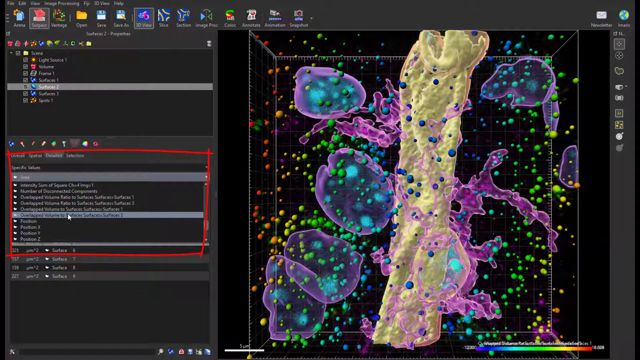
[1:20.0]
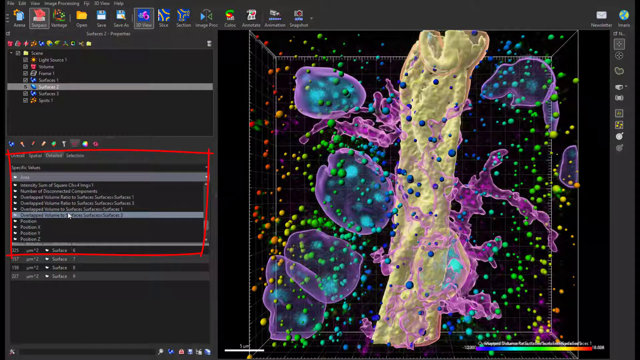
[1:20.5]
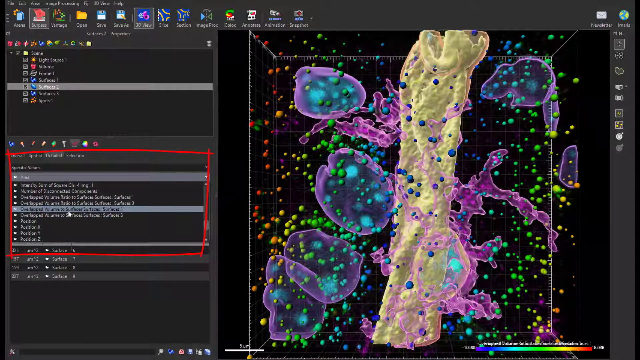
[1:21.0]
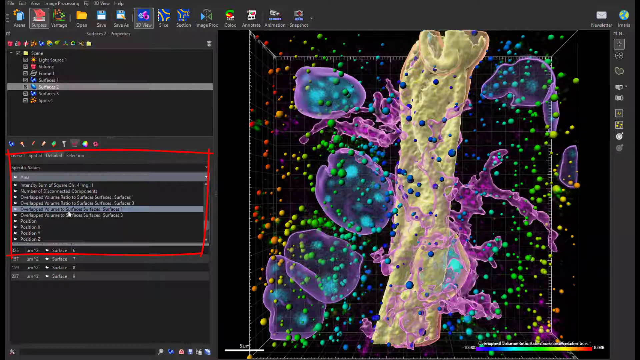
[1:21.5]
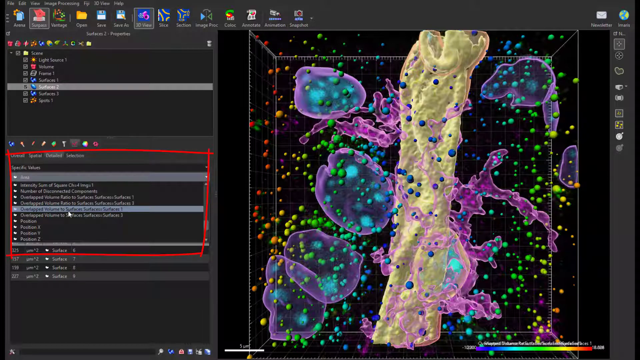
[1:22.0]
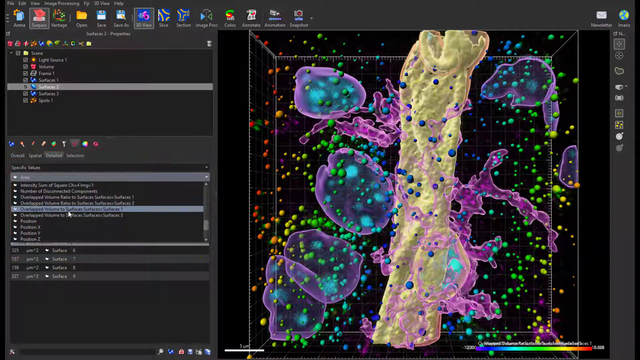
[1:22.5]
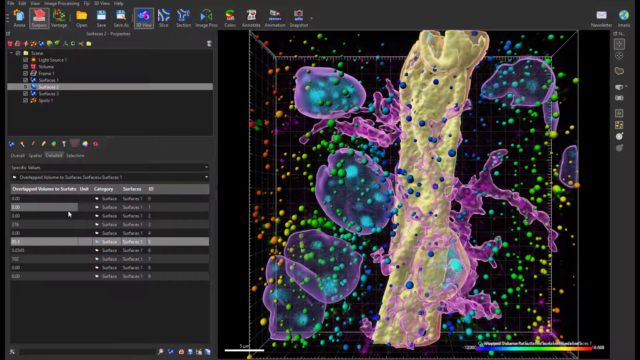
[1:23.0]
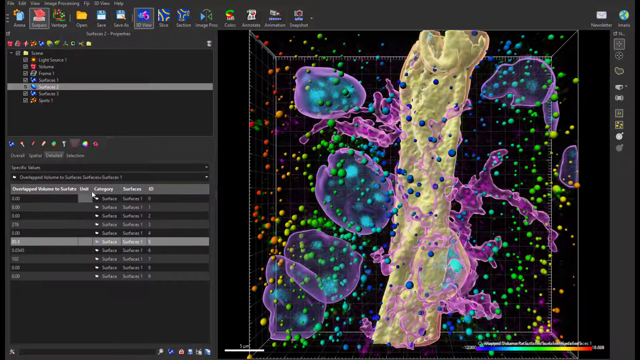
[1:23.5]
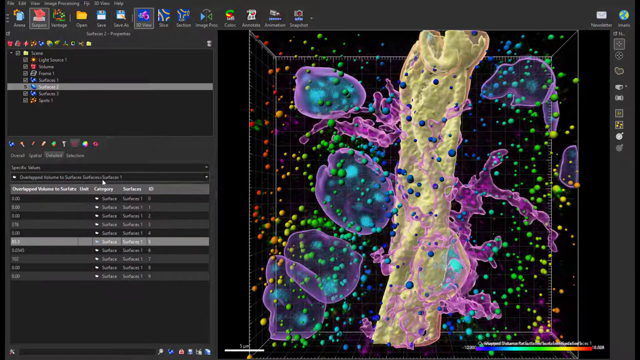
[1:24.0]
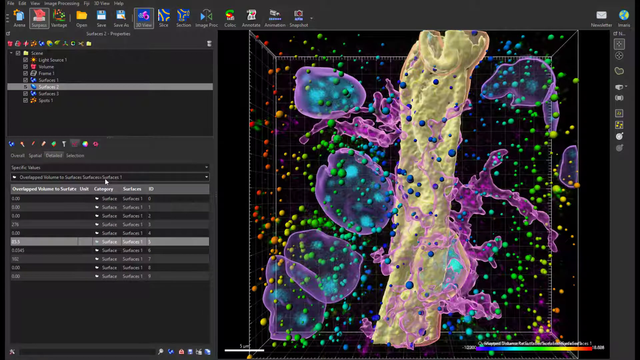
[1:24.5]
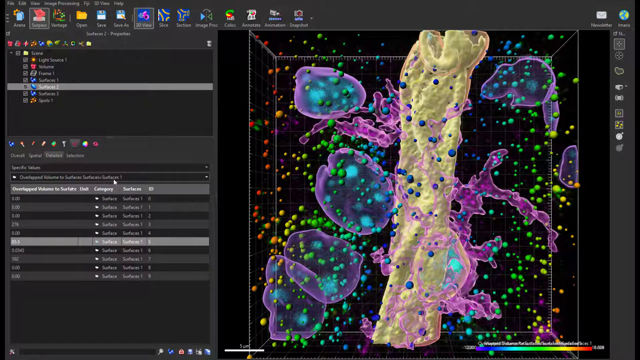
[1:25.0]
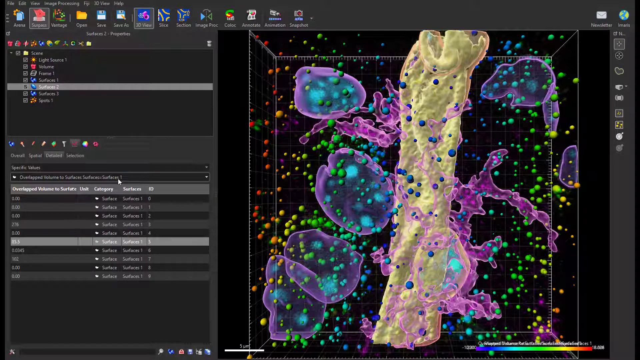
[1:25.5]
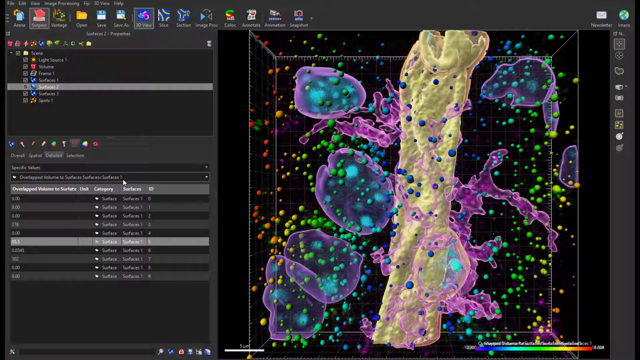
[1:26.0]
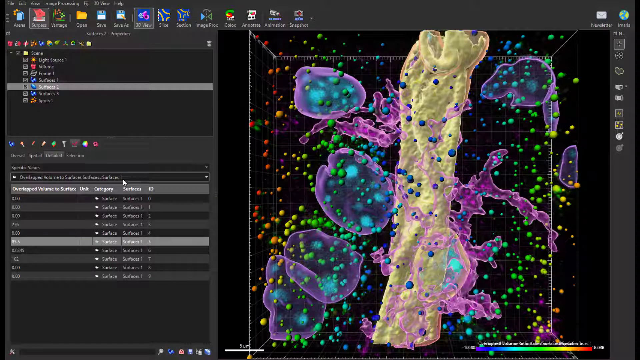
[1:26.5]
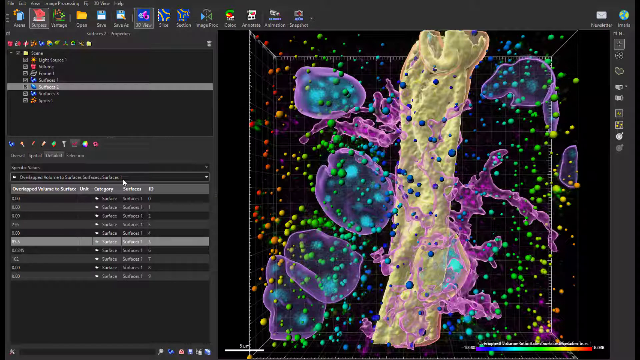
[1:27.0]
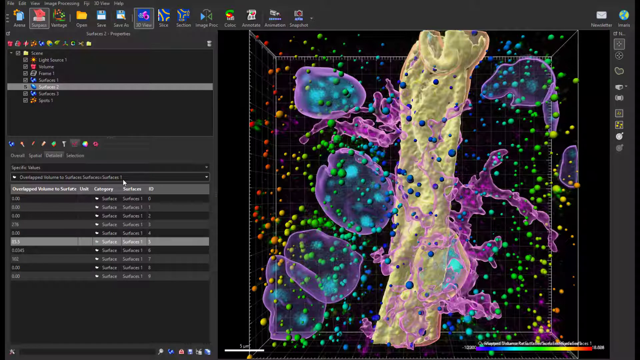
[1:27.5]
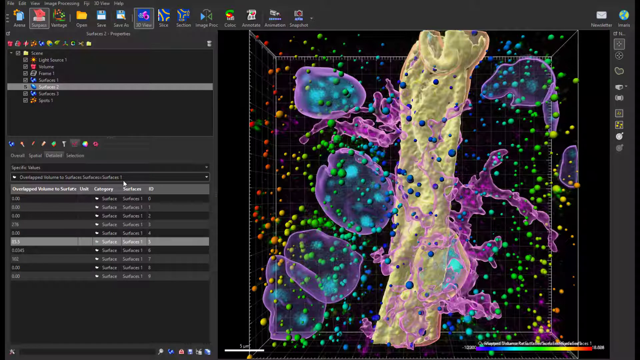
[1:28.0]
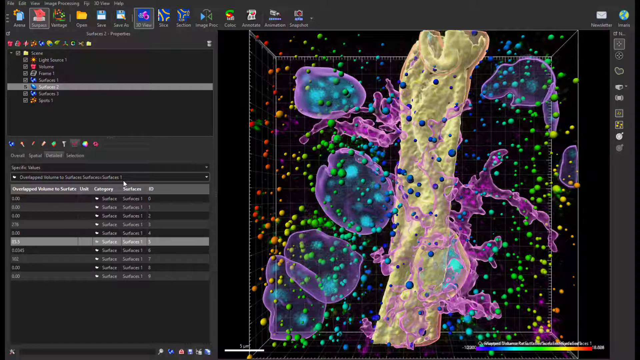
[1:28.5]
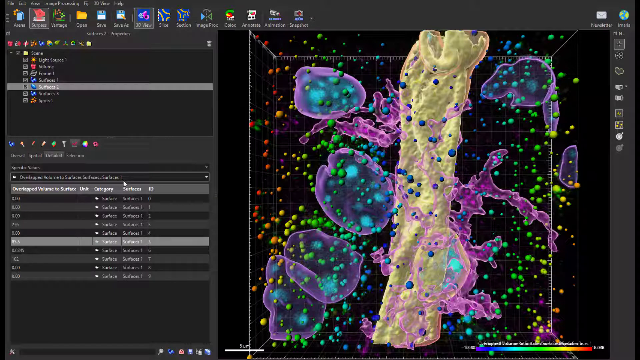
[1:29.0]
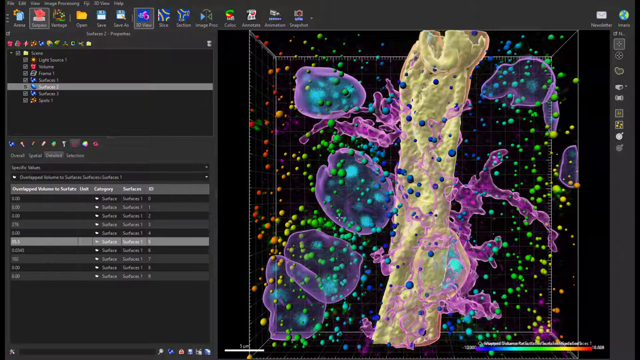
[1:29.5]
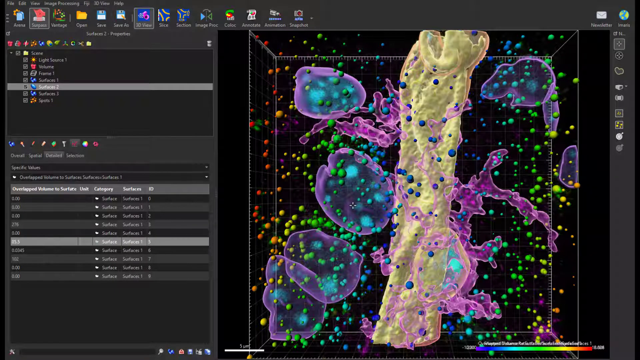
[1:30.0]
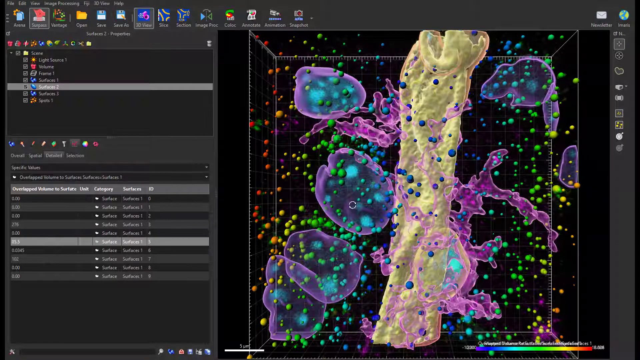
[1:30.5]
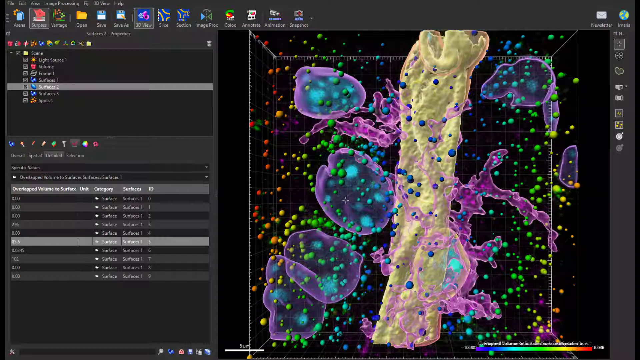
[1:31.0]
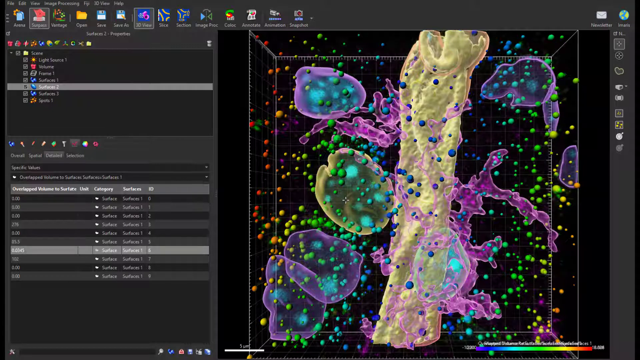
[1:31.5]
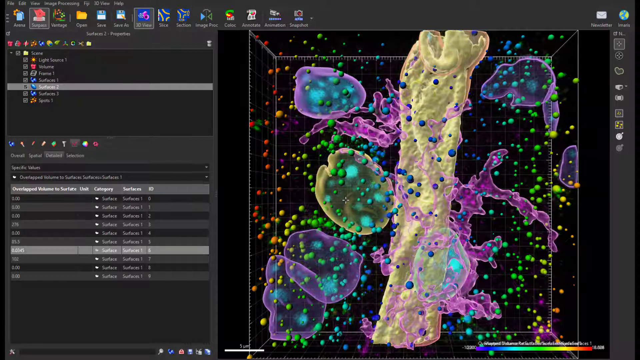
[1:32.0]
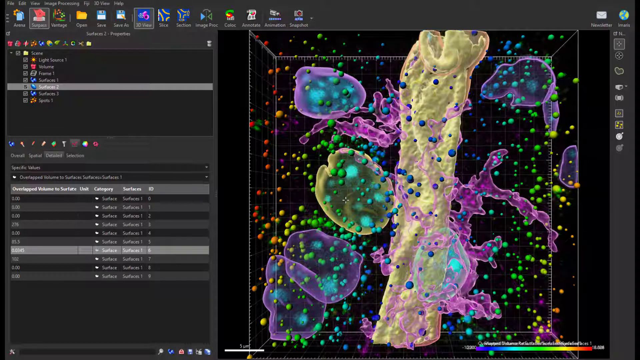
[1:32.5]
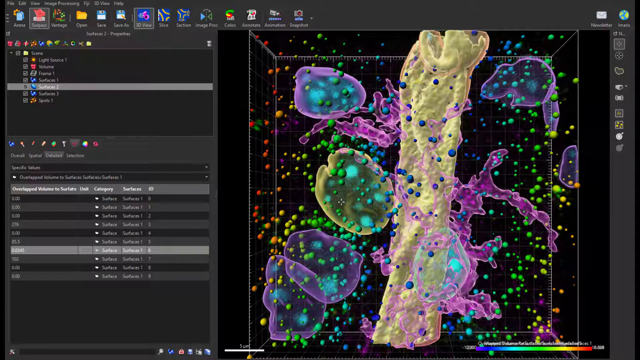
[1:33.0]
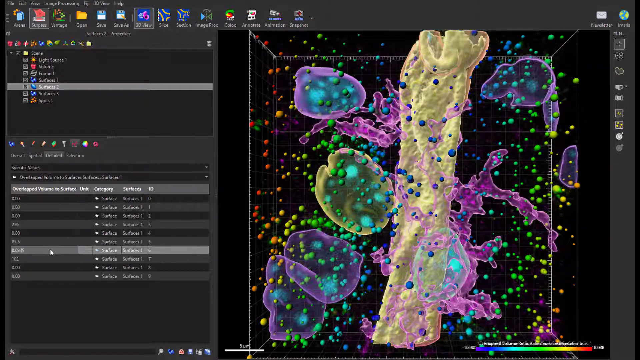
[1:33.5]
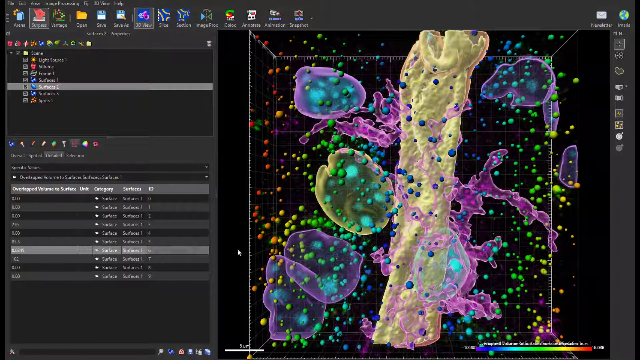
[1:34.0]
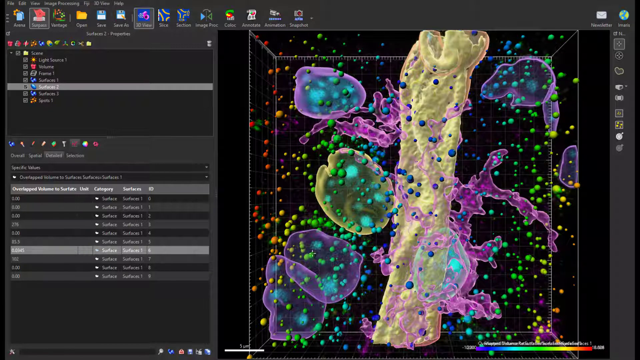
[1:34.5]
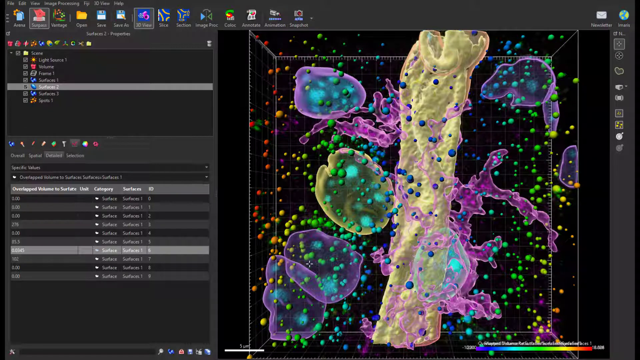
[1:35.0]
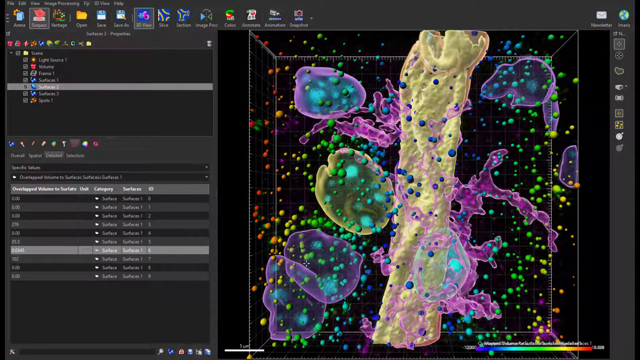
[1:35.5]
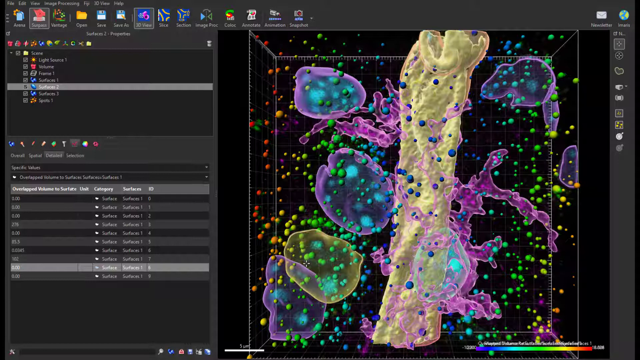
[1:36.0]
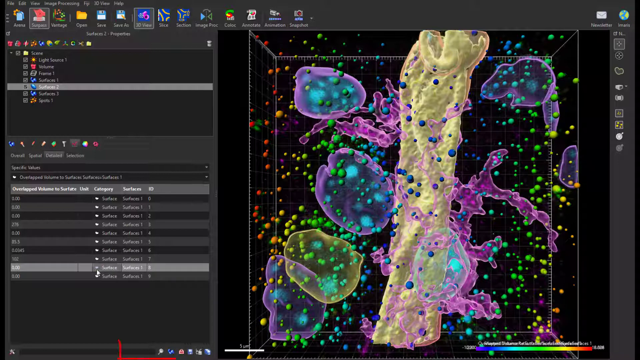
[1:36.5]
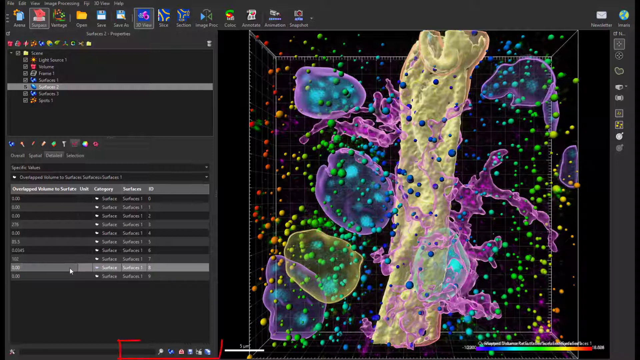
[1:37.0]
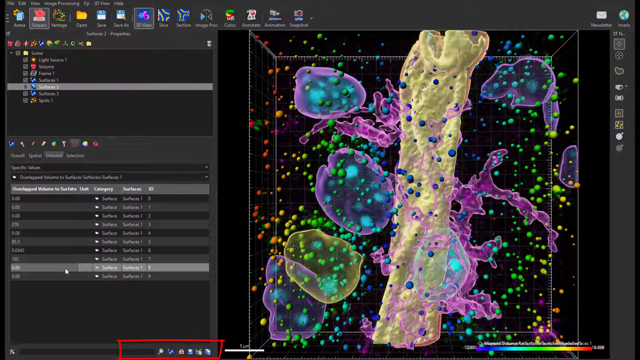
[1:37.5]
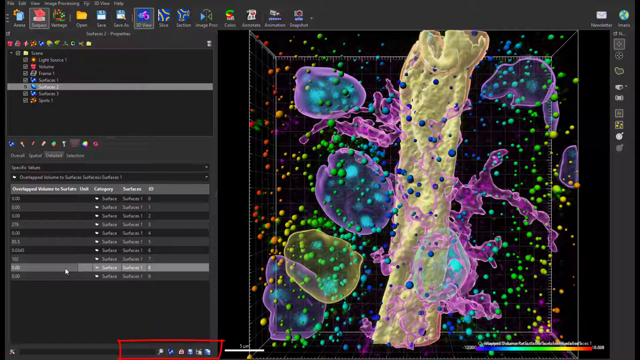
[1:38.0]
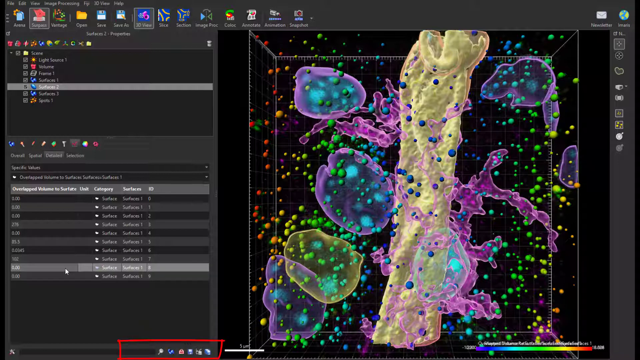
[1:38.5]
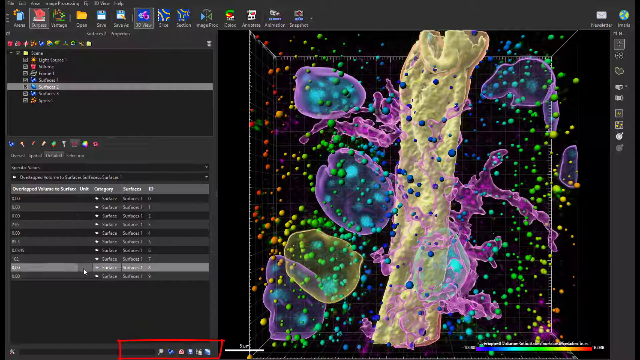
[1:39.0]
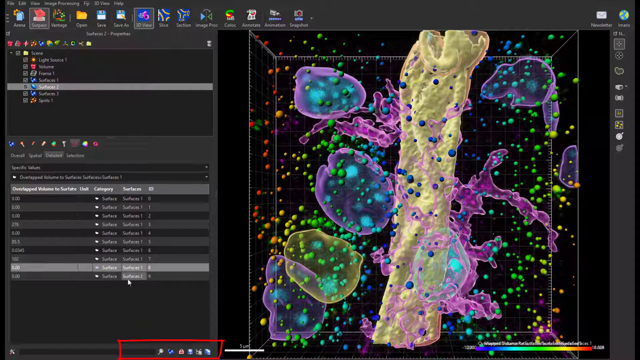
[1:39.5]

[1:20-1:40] The image being modified is on the right side, taking up most of the frame, and the person continues modifying it. They click on one part, and whatever is highlighted turns yellow. The image contains oddly shaped objects that look like they should be circles but are not perfect, not even good ovals. A red rectangle outline is on the side. The pointer stops on the highlighted part, which reads "overlap volume to surfaces," then "surfaces," what looks like an equal sign, and "surfaces 3"; except for the word "to," all the words are capitalized. Underneath are "position X," "position Y" and "position Z." The heading at the top reads "oval spatial detail" and "selection," which appear to be tabs; the word "detail" is highlighted, apparently the tab currently in use.